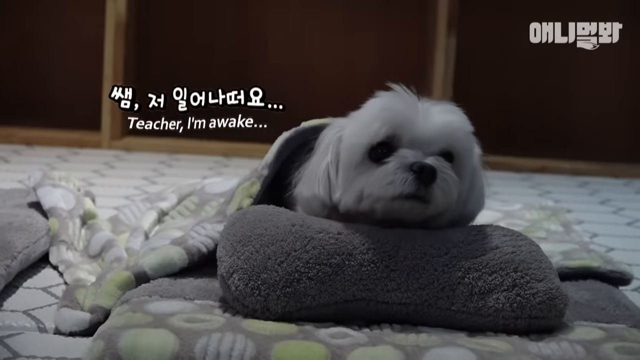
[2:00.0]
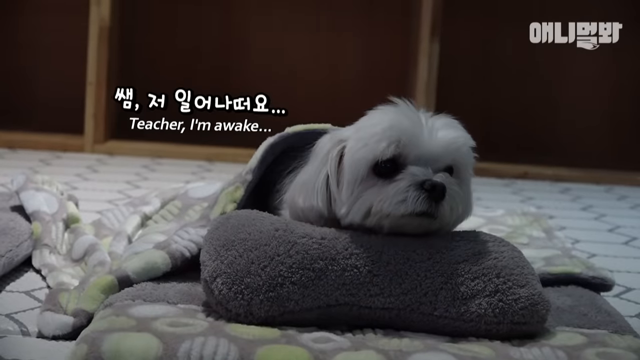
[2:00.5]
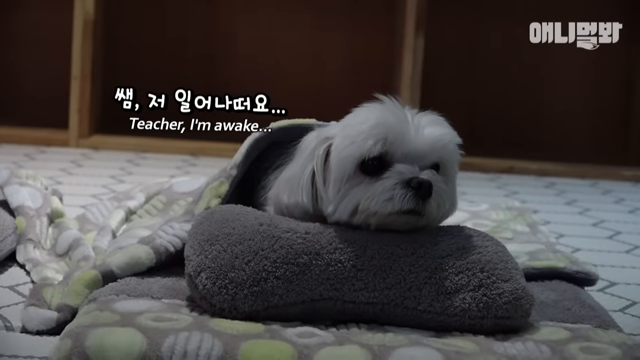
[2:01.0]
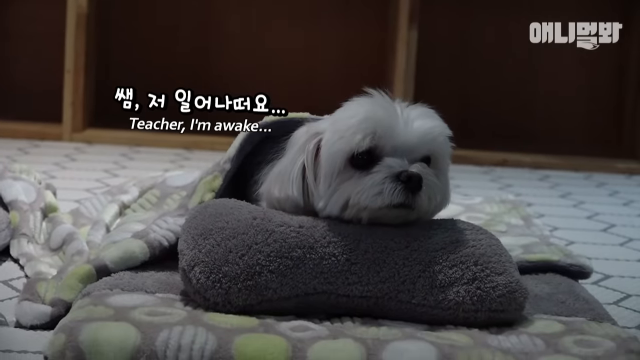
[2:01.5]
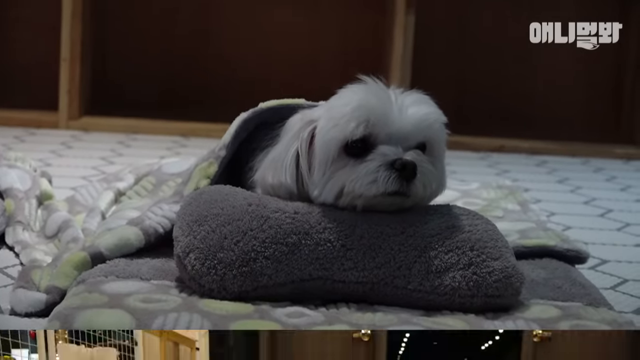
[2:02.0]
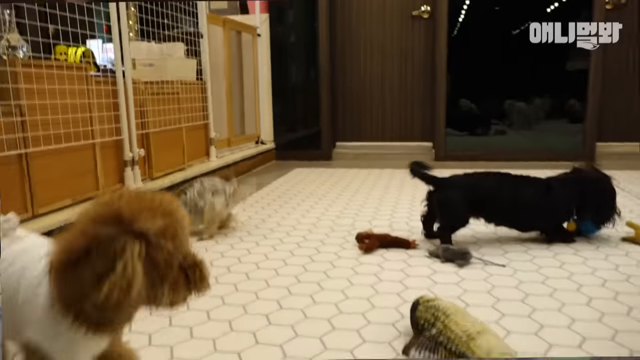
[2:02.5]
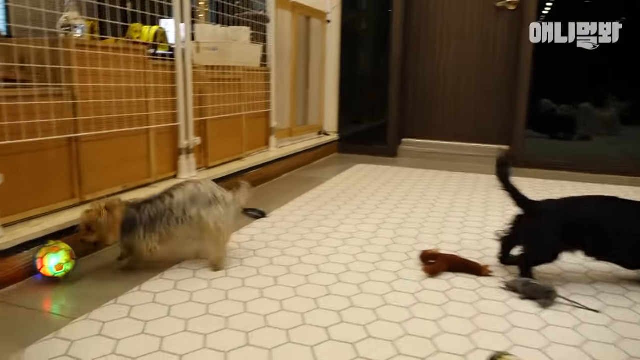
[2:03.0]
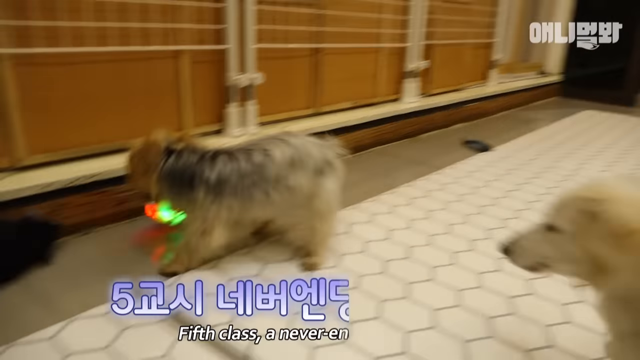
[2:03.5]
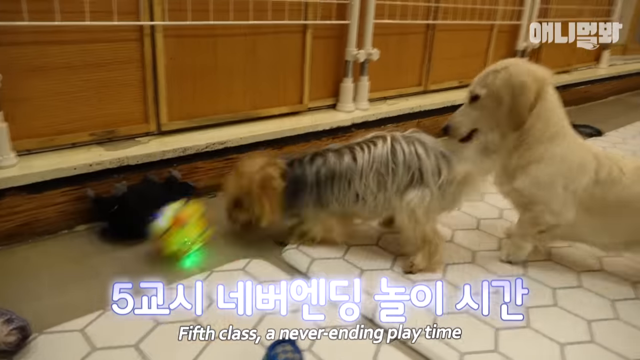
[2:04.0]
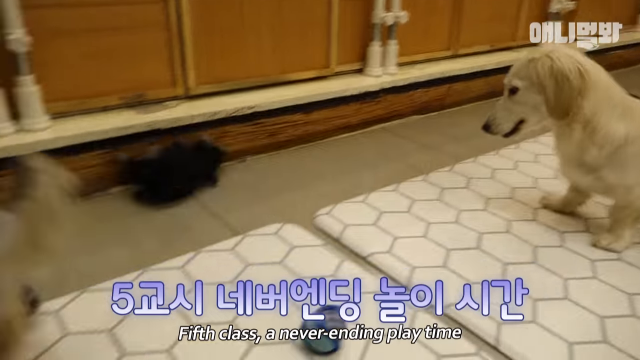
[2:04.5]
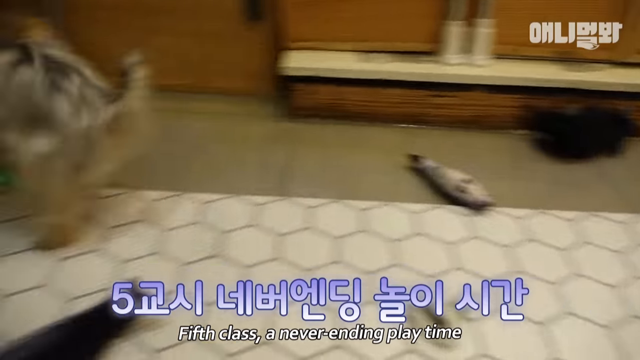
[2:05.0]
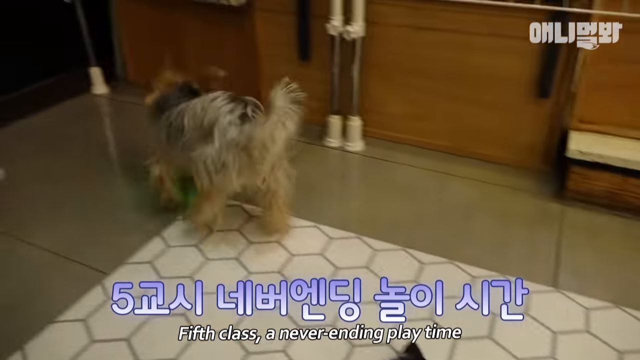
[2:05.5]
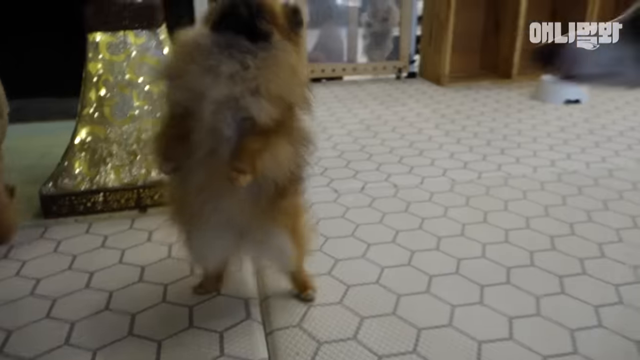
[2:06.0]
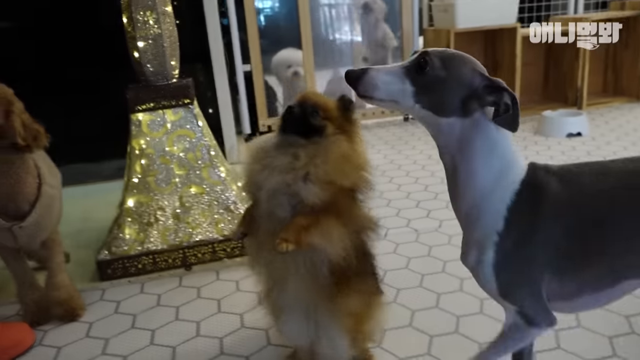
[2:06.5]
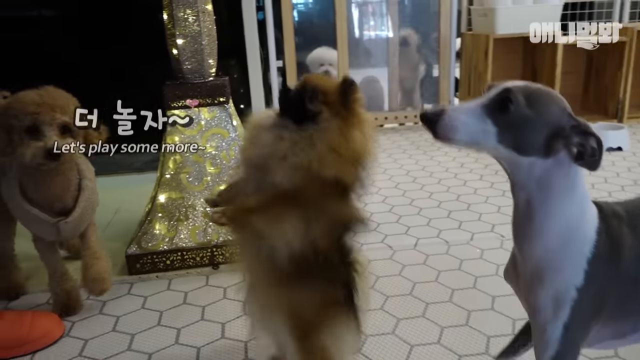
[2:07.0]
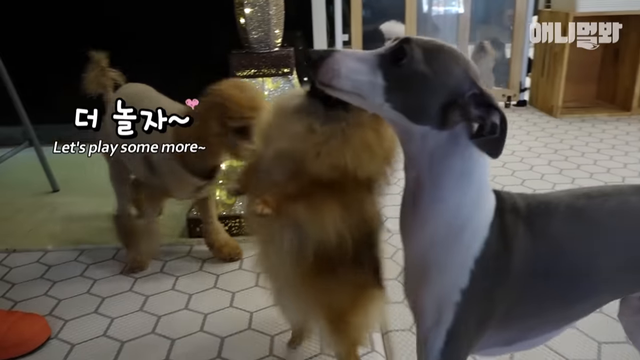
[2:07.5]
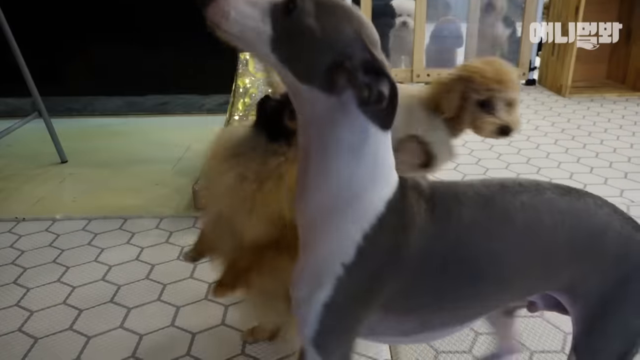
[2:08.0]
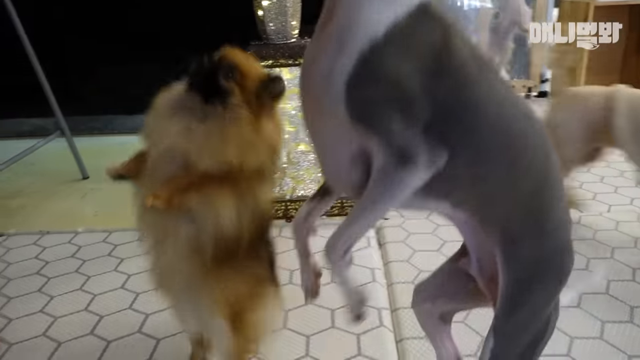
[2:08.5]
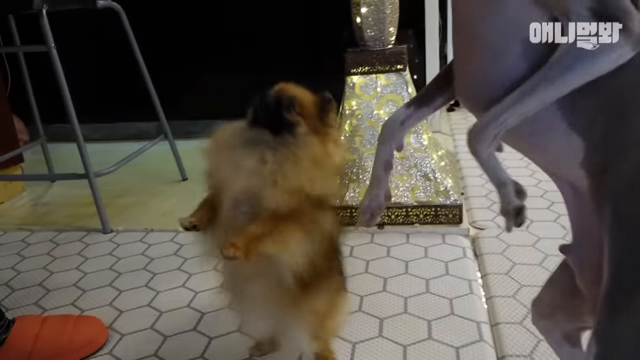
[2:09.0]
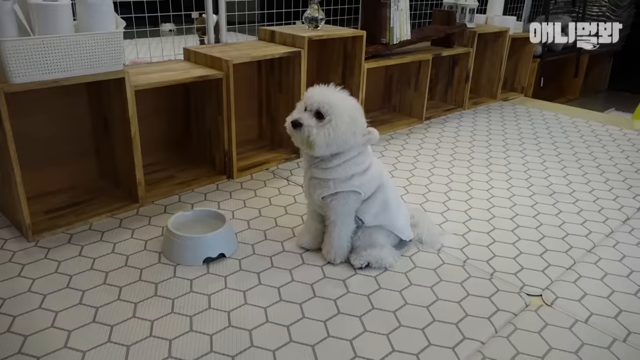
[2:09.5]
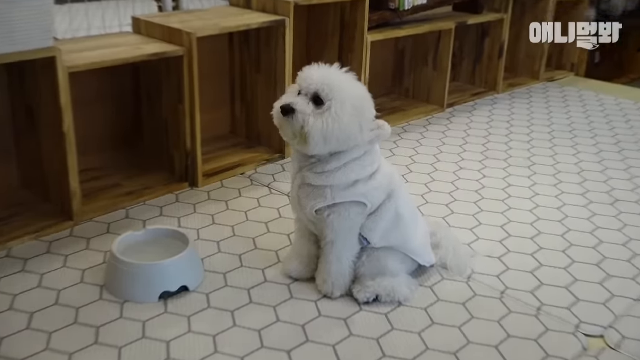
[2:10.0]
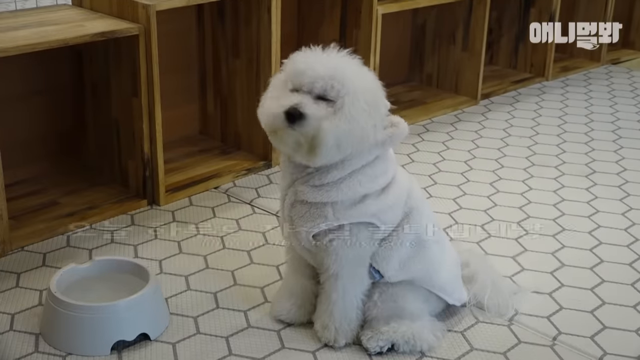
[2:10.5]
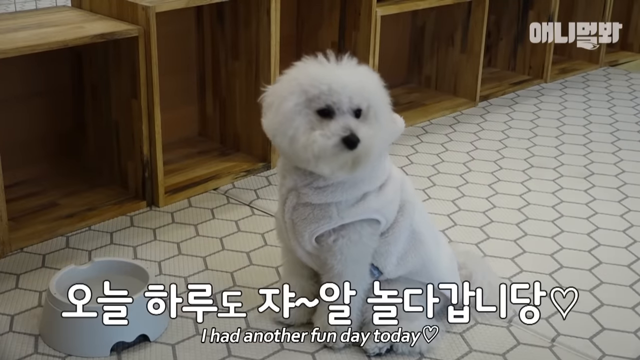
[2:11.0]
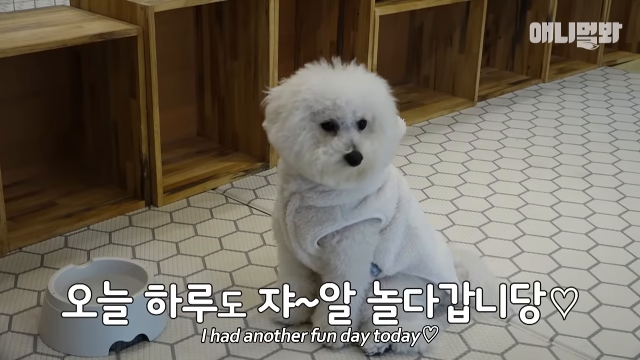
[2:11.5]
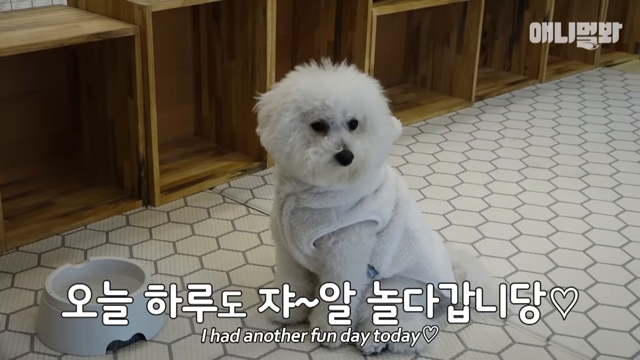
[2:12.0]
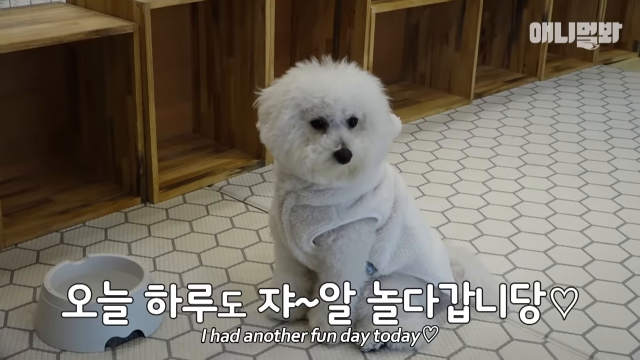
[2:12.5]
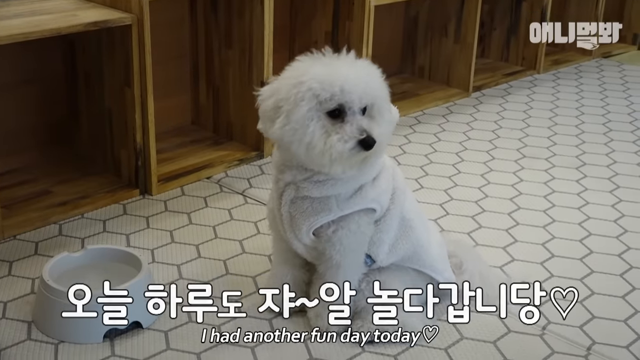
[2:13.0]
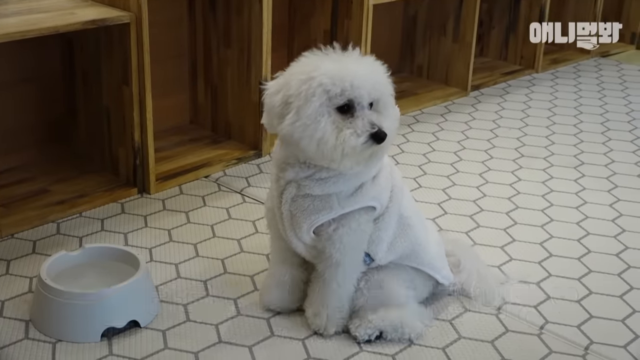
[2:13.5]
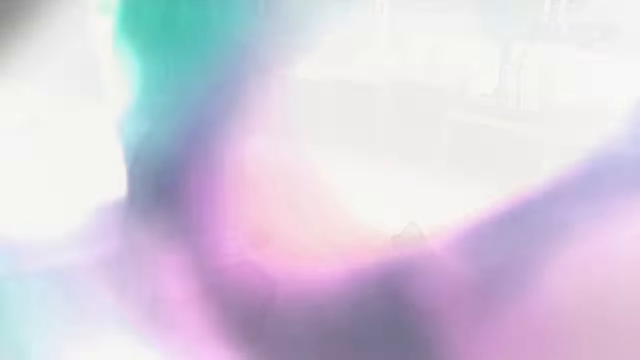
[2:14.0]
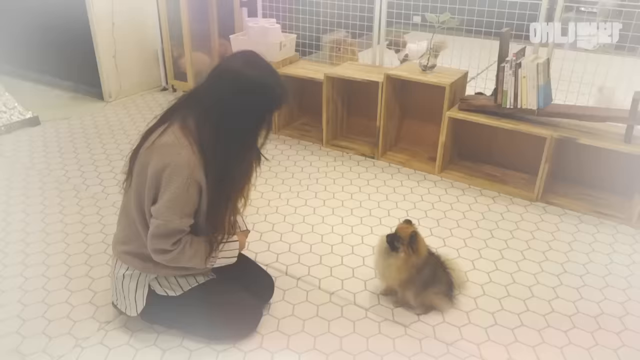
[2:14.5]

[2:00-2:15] A white dog looks out from its bed, and then a bunch of dogs play: a little brown dog jumps on its hind legs, and a fluffy white dog wears a white sweater. The woman bows while a little brown dog sits in front of her and bows back. The dogs play with a light-up toy that flashes green and orange lights. A skinny gray dog also jumps down on its hind legs. Some kind of wooden shelves are in the background, and there is a clear door through which a couple of other dogs can be seen.